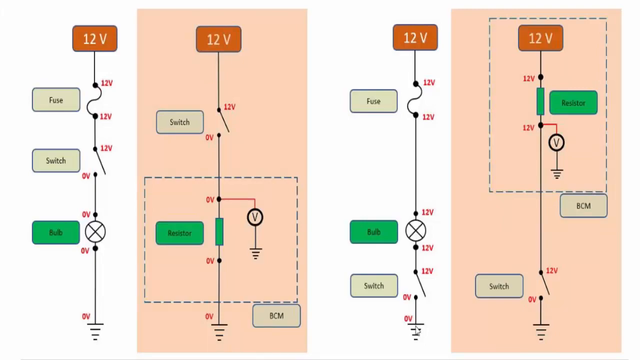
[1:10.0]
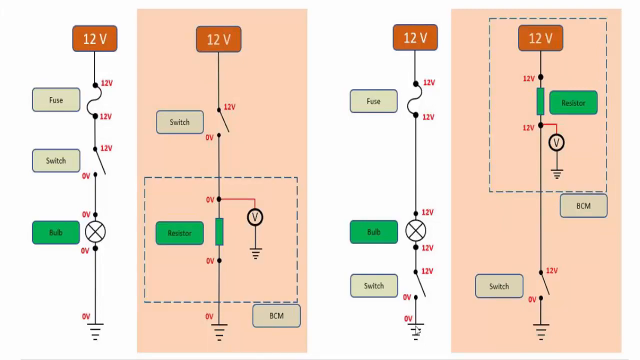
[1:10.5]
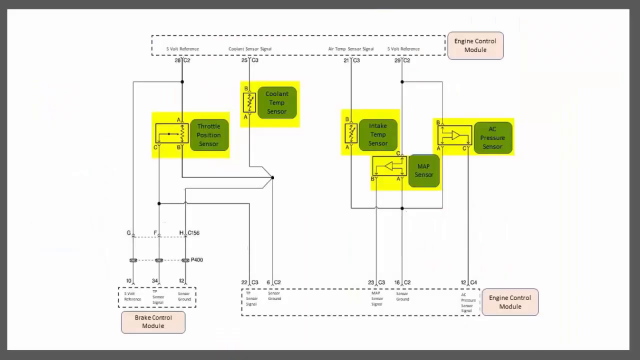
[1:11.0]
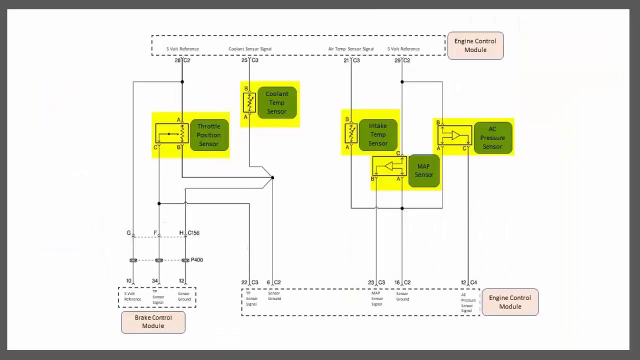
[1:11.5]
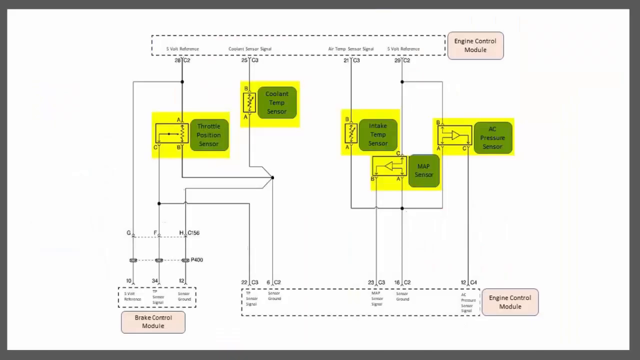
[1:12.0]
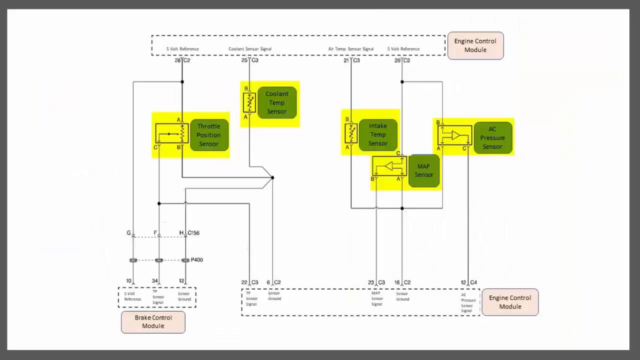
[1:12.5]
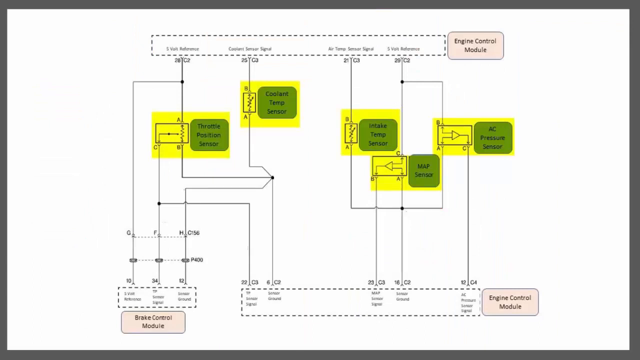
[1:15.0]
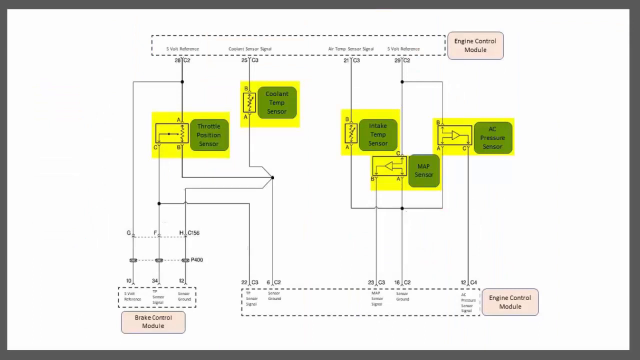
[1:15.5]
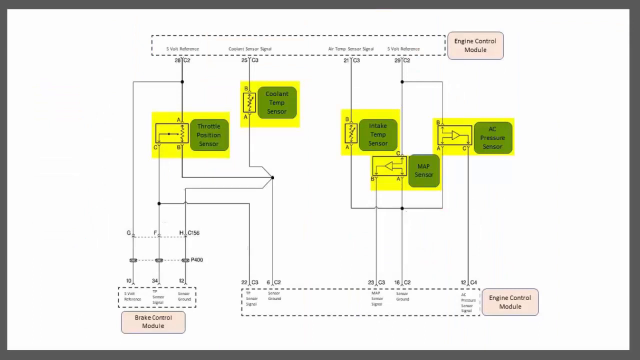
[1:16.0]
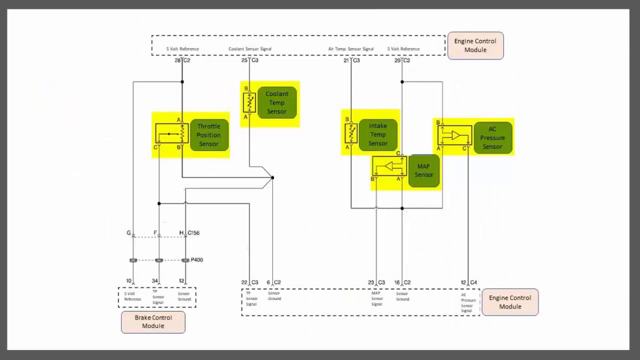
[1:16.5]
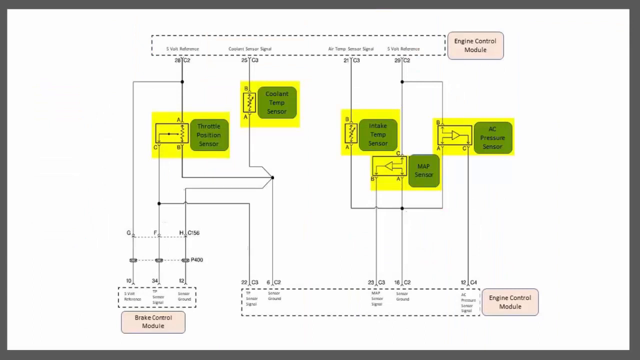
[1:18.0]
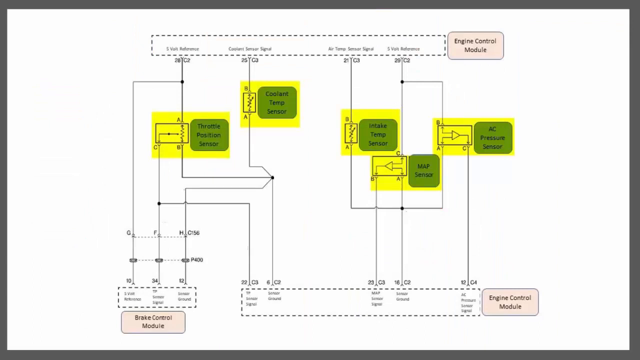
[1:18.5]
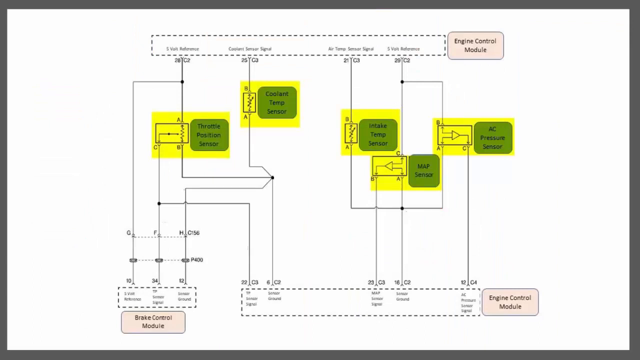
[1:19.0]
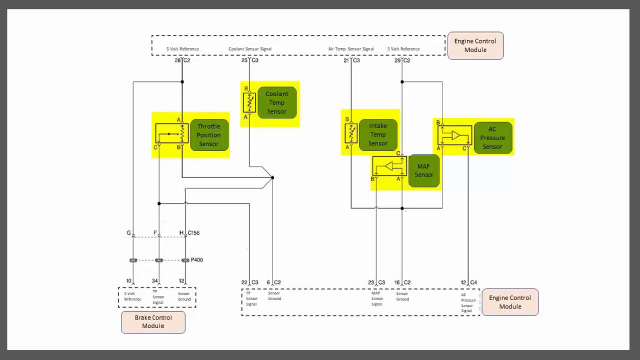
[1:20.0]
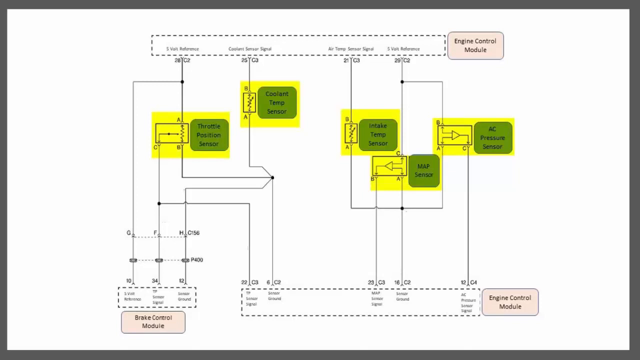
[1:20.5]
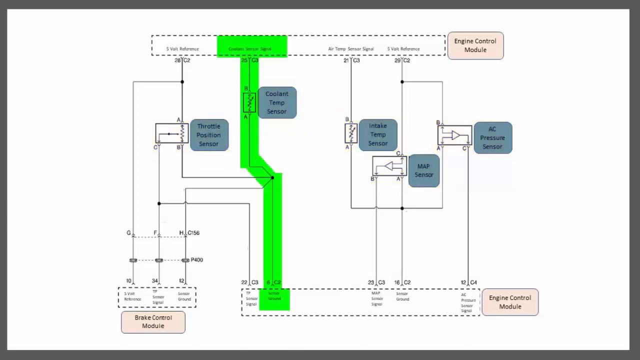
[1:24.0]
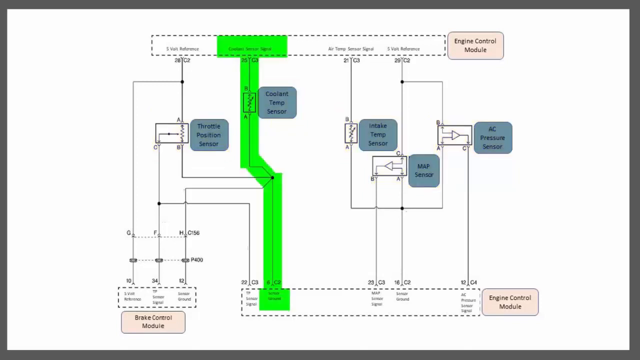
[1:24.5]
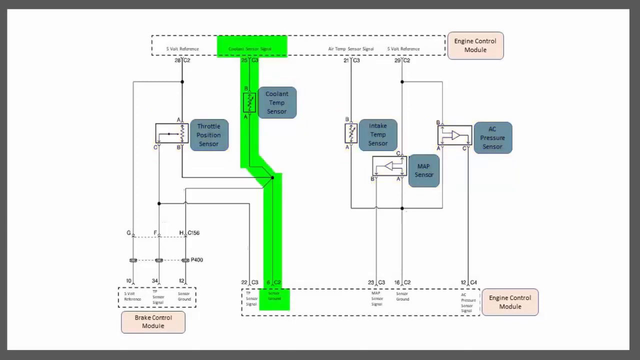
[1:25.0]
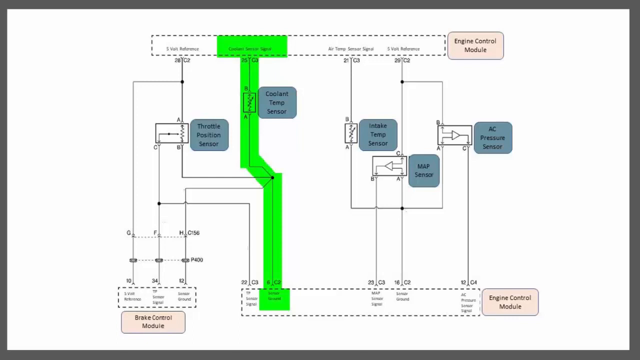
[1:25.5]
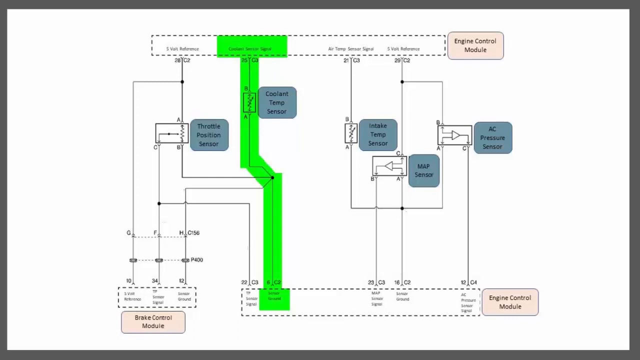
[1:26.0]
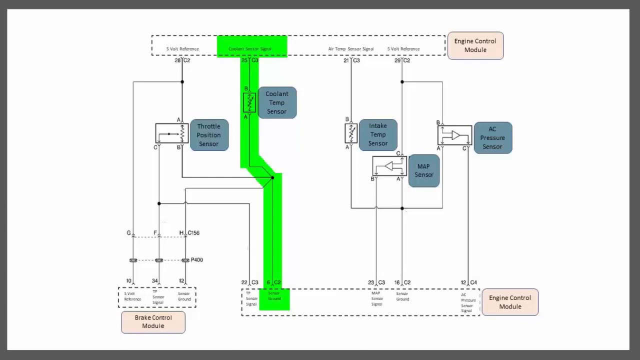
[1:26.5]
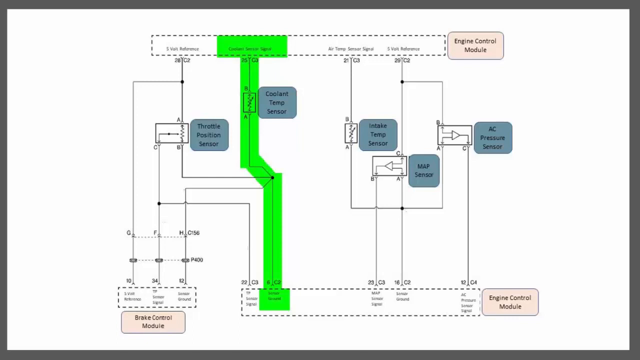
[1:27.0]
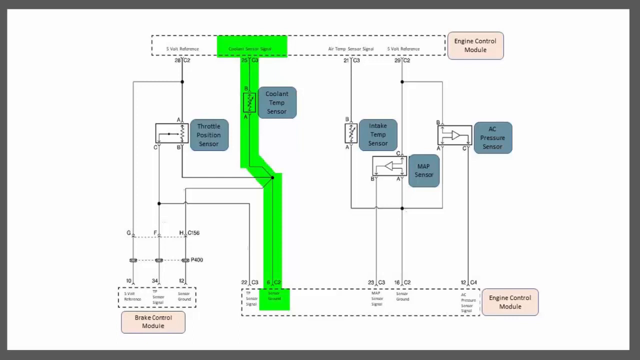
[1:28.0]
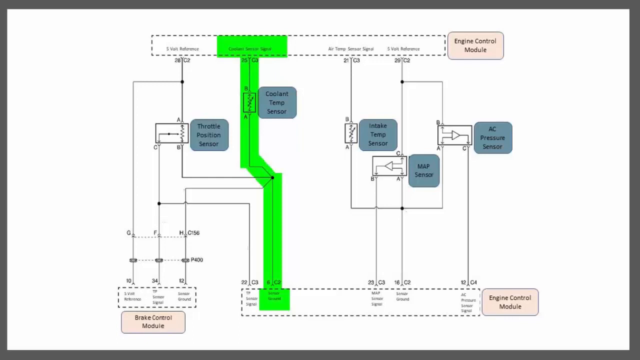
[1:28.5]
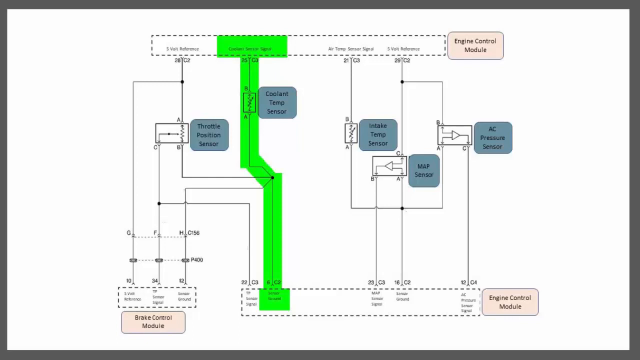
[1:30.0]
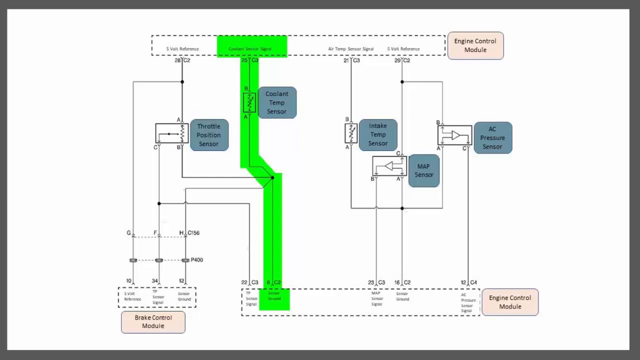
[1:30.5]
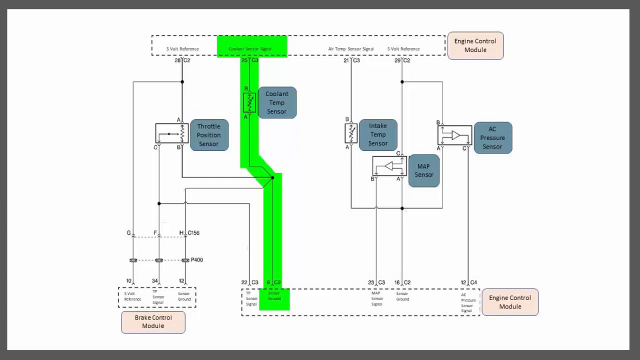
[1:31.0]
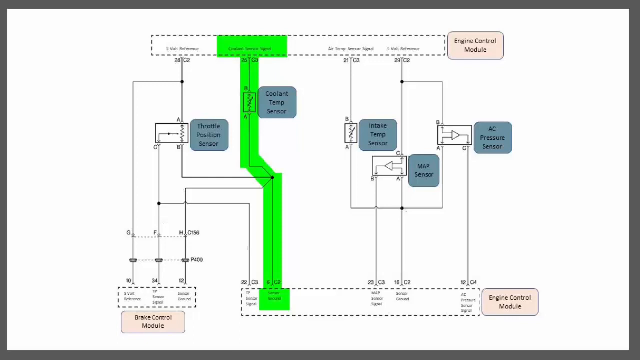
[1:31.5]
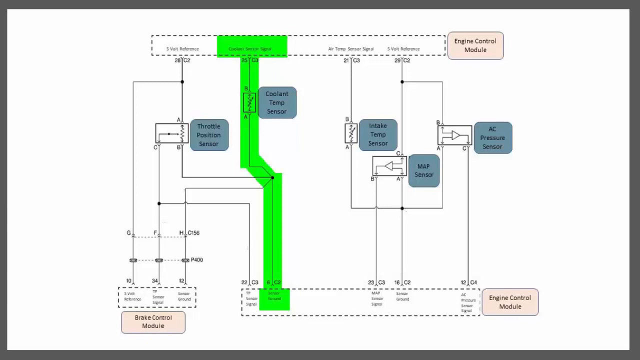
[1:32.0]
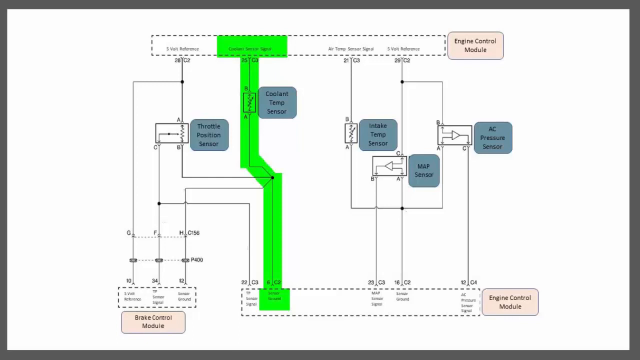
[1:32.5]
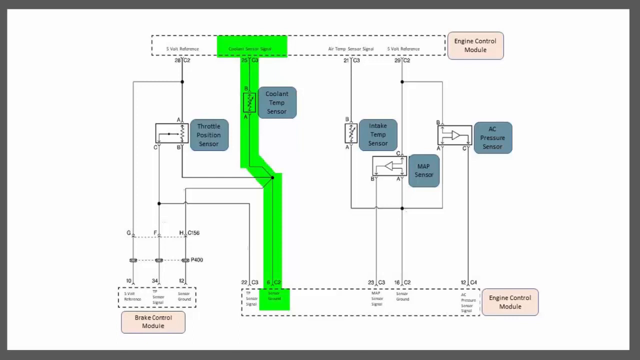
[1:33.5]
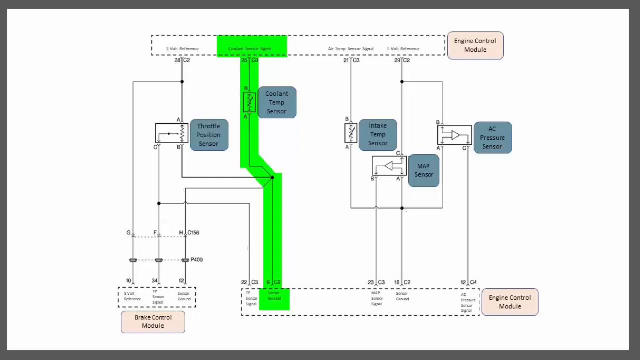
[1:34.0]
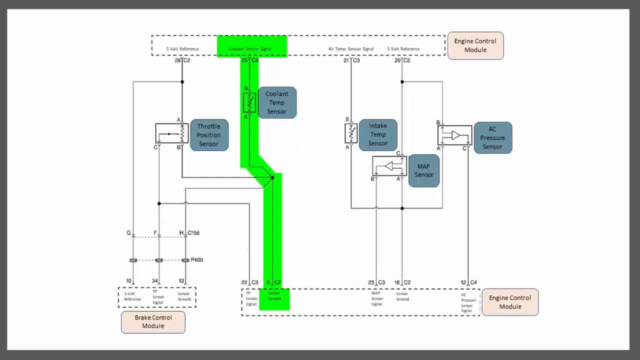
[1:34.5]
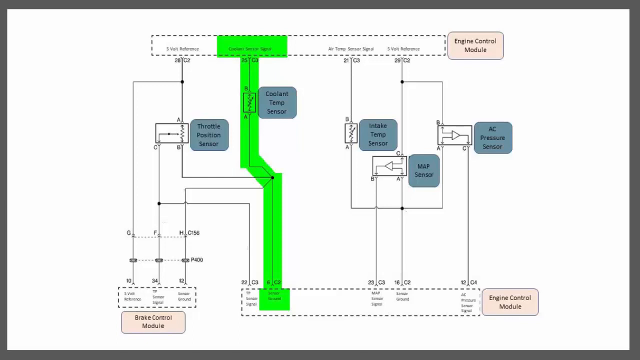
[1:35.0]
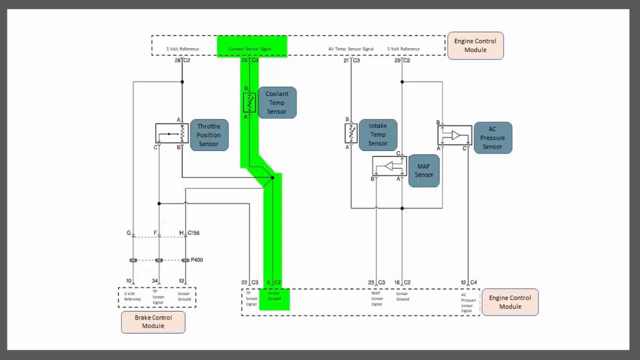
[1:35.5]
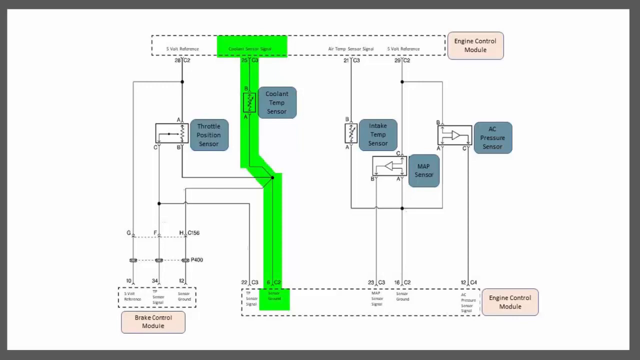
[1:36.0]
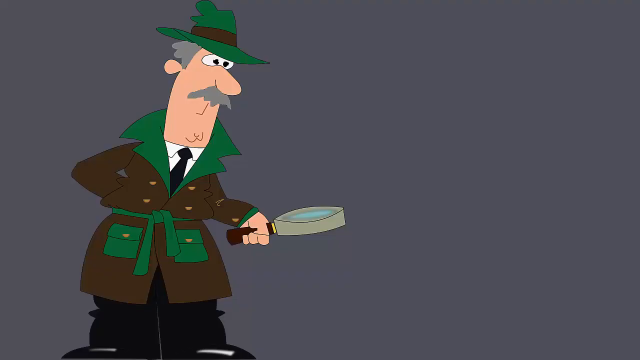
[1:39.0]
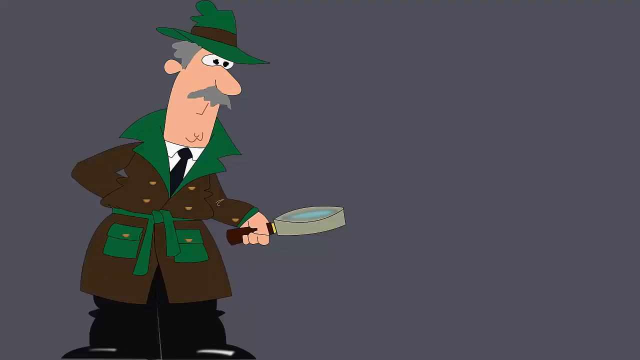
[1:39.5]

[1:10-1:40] A diagram shows a lot of green colors, some representing bulb resistors, along with voltages such as 12 volts in an orange square and a red 12 volts around the resistor. Fuses are in a light color, and a switch, shown as a little rectangle, is also in a light color, among a bunch of other things. "BCM," the body control module, is at the bottom. The diagram has a lot of different electrical components and switches. Another diagram follows, with a lot of greens and yellows, all against a white background. It shows a throttle position sensor, intake, temp sensor, map sensor and AC pressure sensor, many sensors in green. The view stays on this diagram, and a green part in it becomes highlighted, with "engine control module" written in one spot near the AC pressure sensor and map sensor.